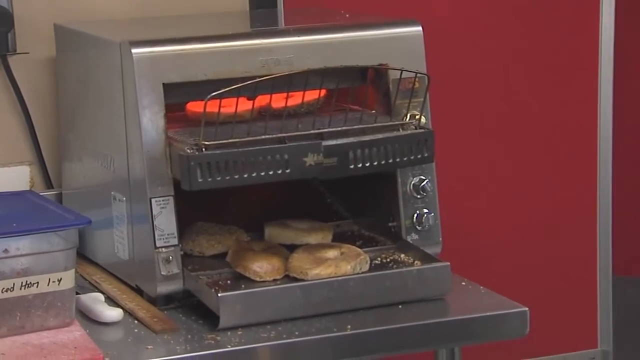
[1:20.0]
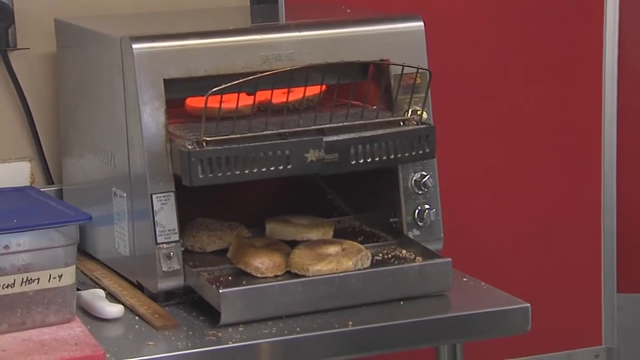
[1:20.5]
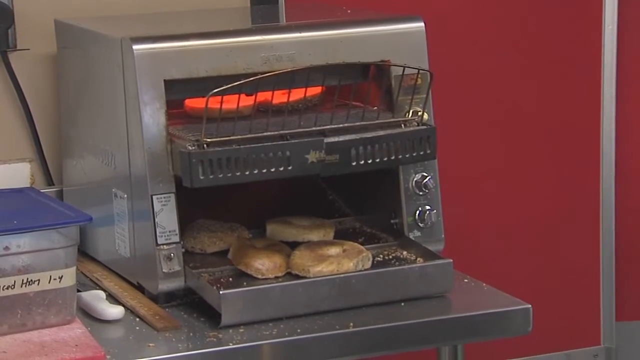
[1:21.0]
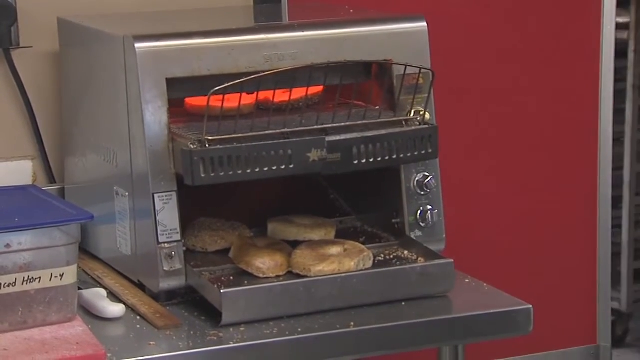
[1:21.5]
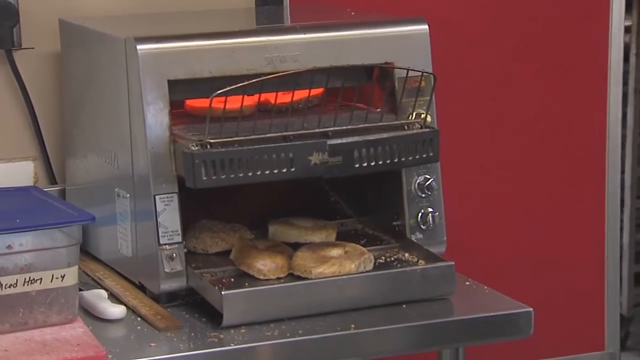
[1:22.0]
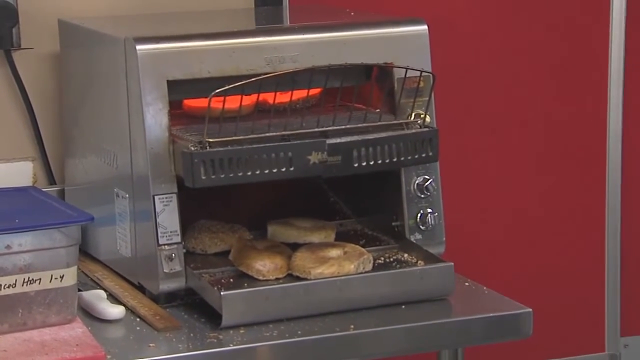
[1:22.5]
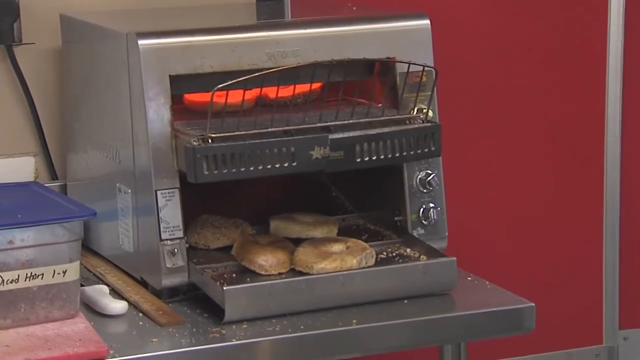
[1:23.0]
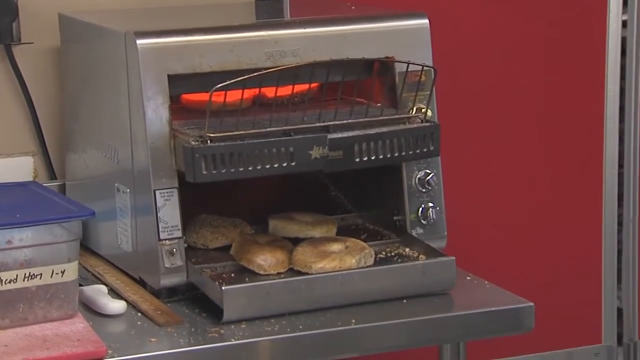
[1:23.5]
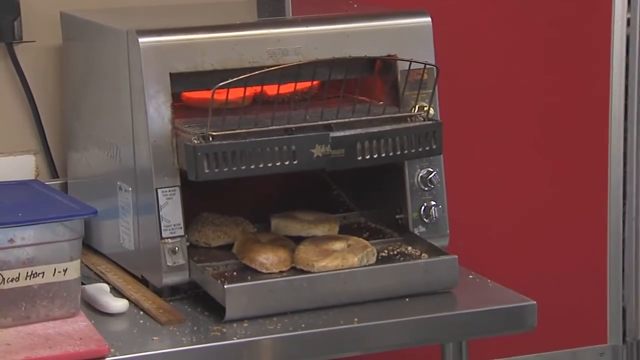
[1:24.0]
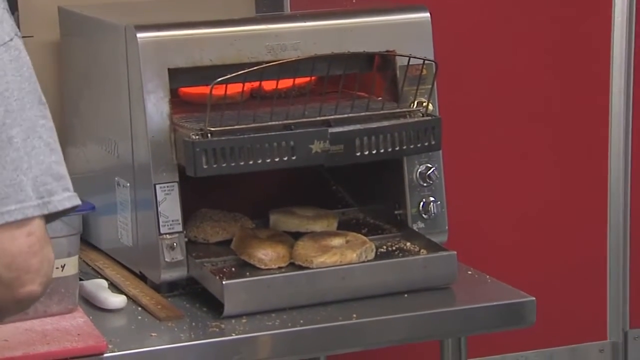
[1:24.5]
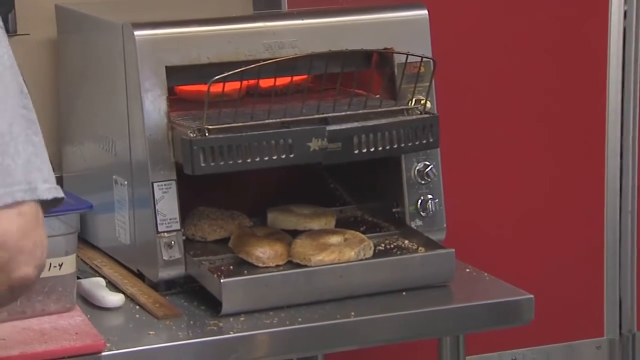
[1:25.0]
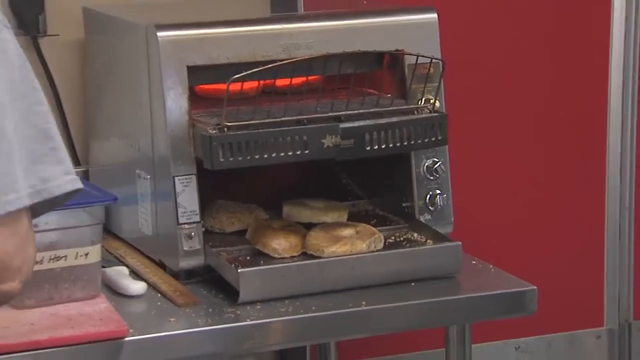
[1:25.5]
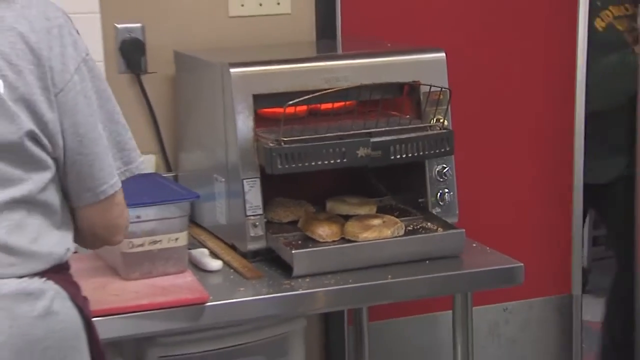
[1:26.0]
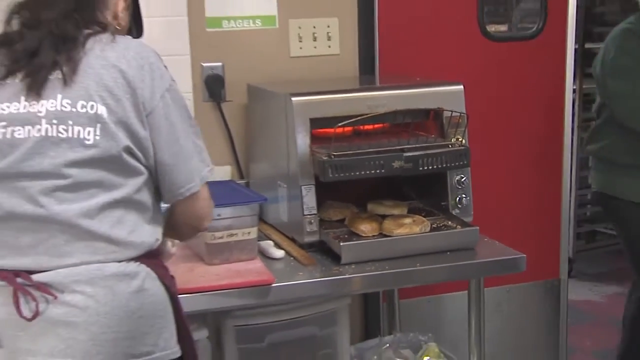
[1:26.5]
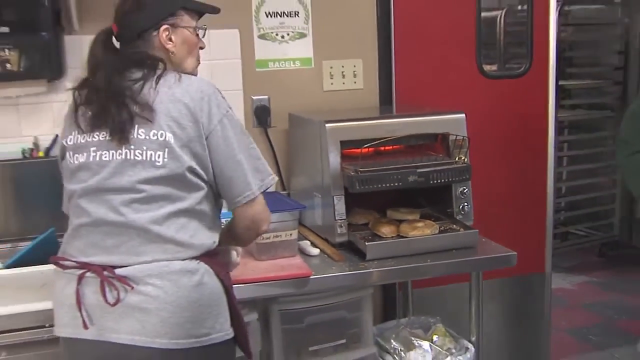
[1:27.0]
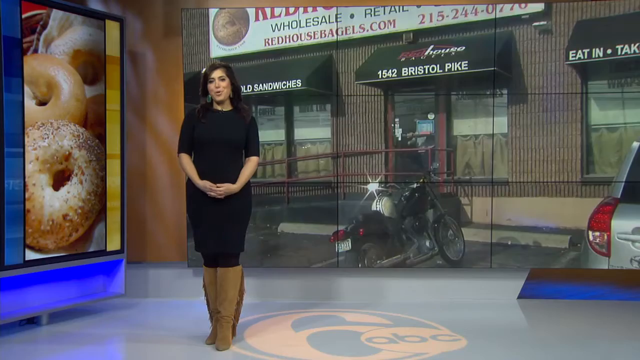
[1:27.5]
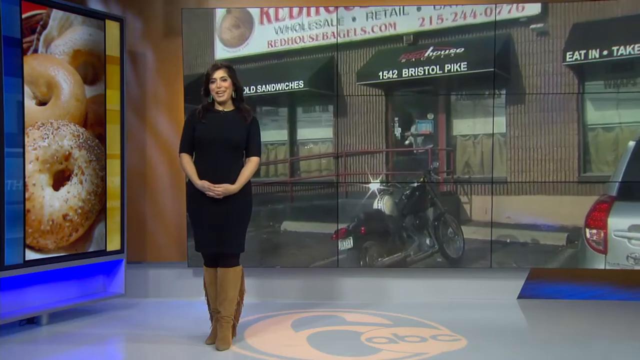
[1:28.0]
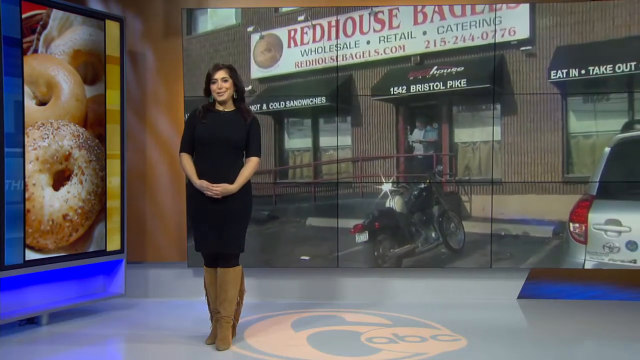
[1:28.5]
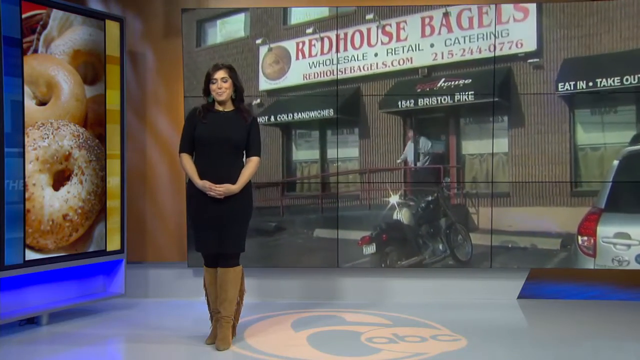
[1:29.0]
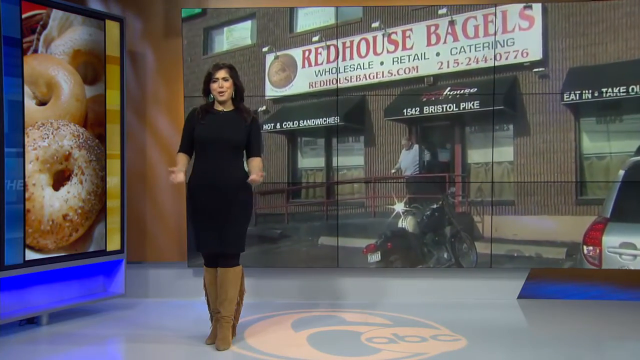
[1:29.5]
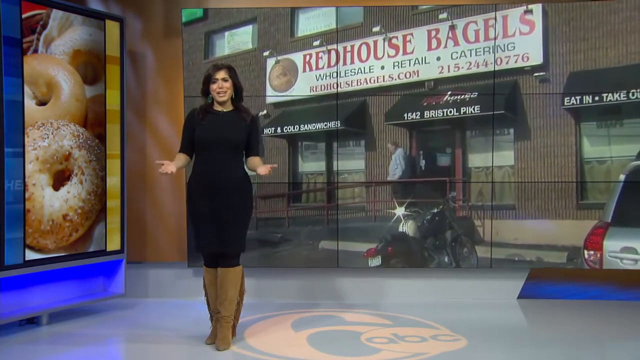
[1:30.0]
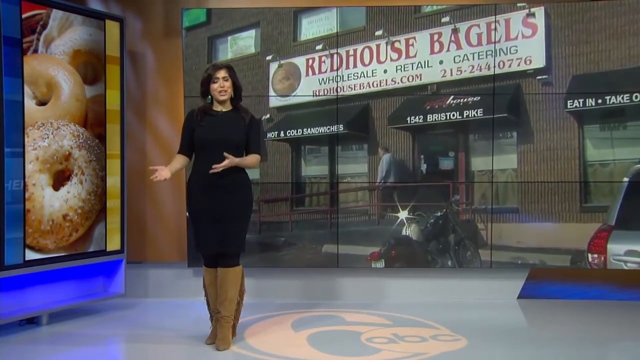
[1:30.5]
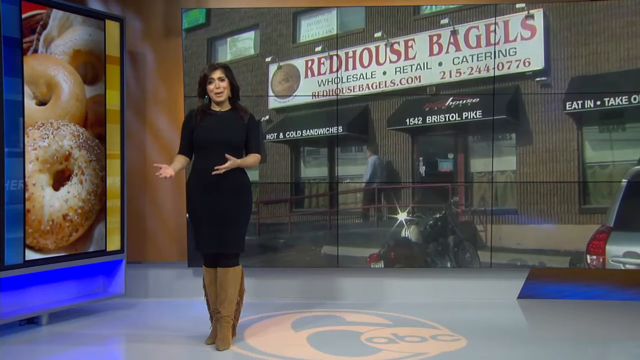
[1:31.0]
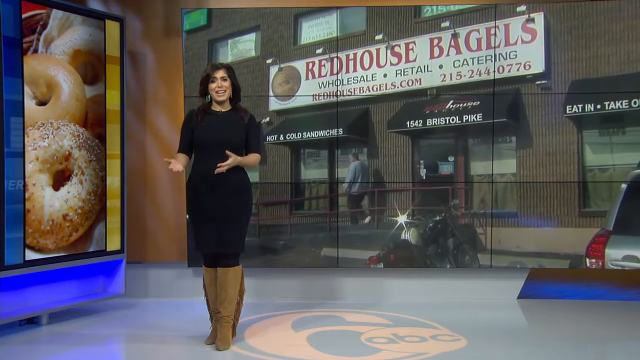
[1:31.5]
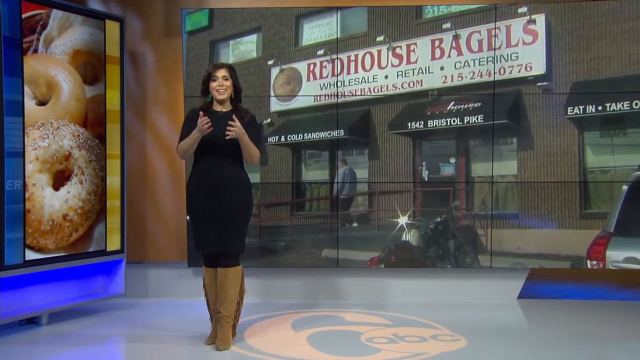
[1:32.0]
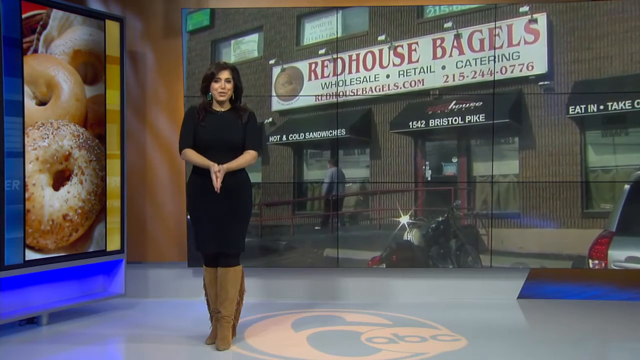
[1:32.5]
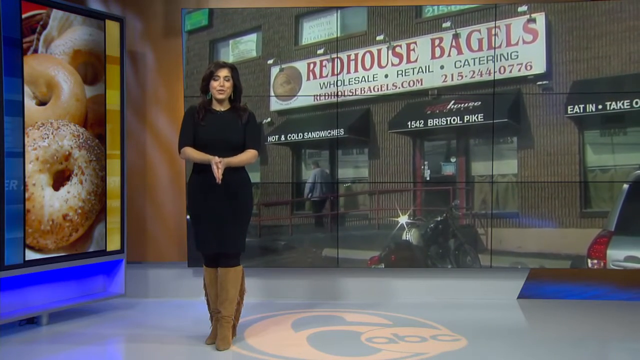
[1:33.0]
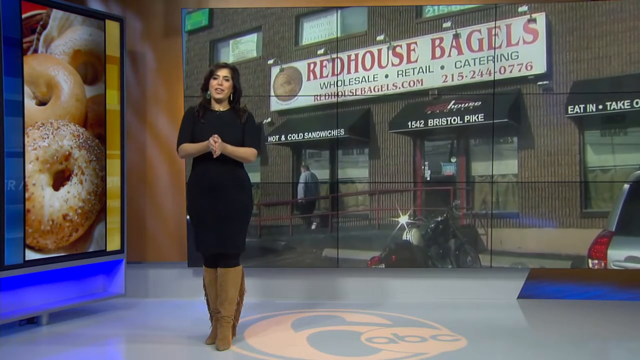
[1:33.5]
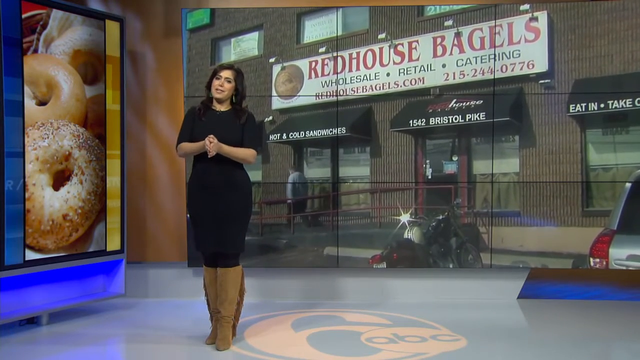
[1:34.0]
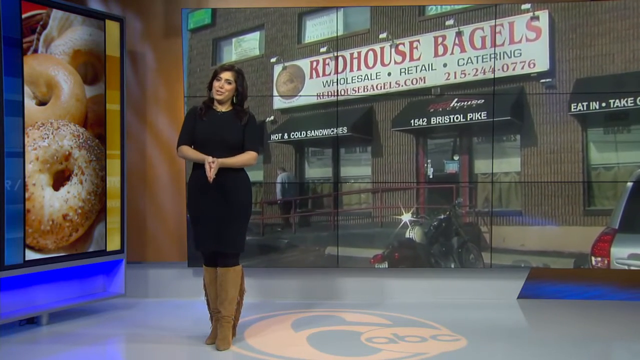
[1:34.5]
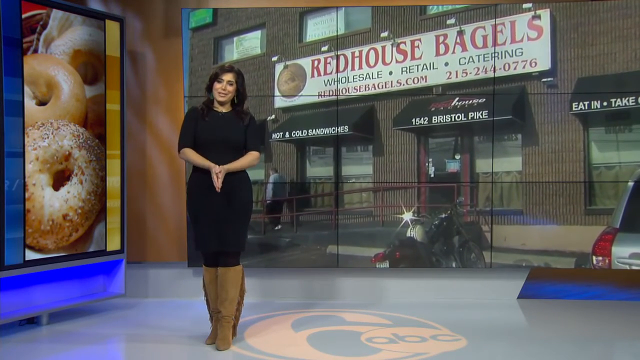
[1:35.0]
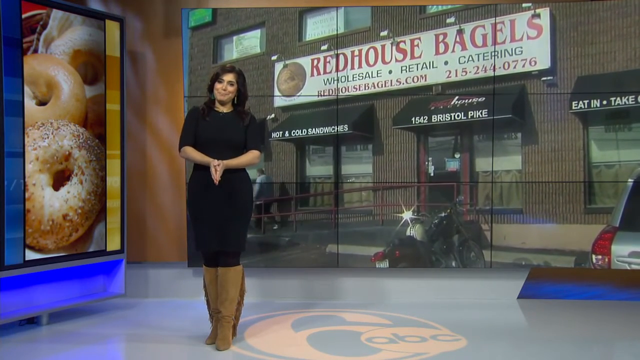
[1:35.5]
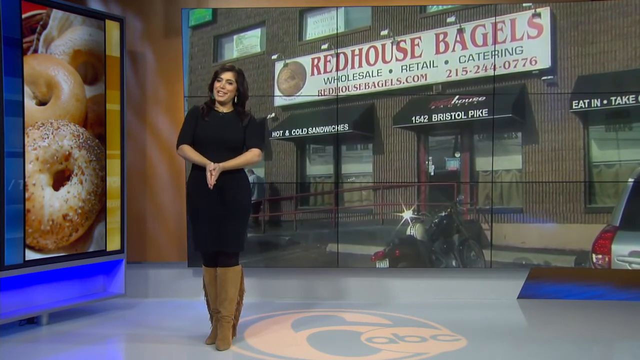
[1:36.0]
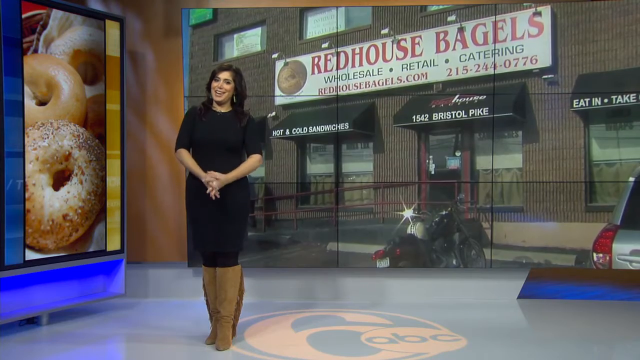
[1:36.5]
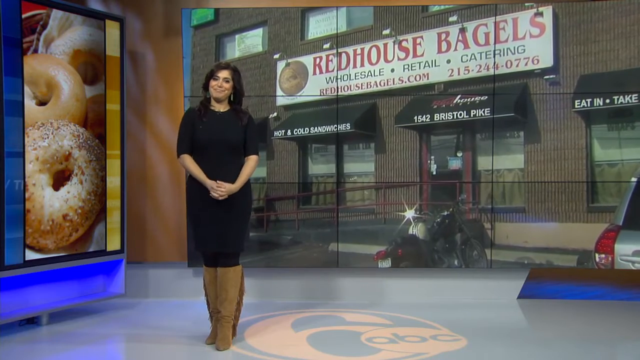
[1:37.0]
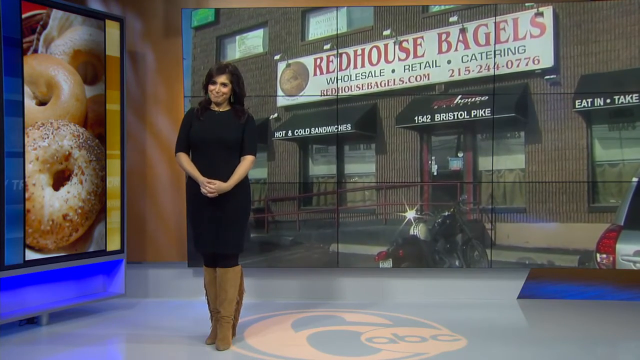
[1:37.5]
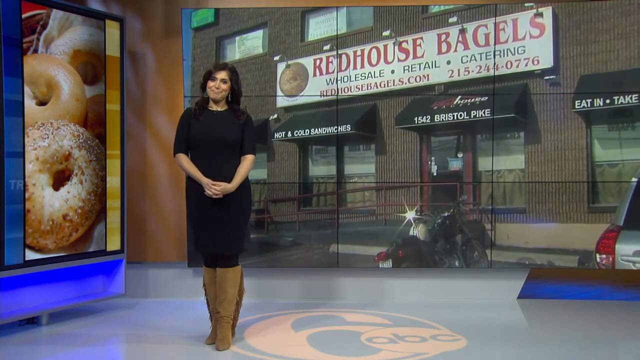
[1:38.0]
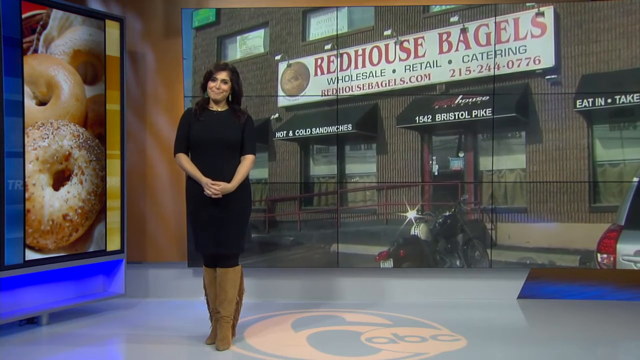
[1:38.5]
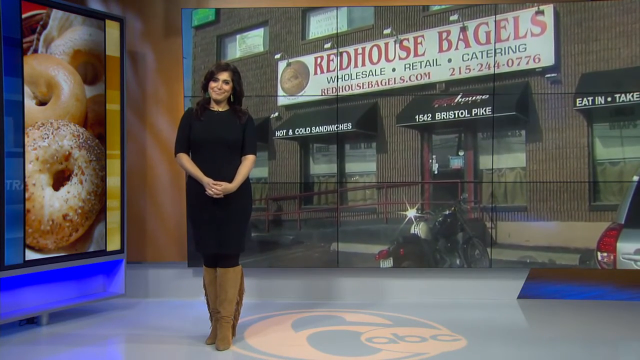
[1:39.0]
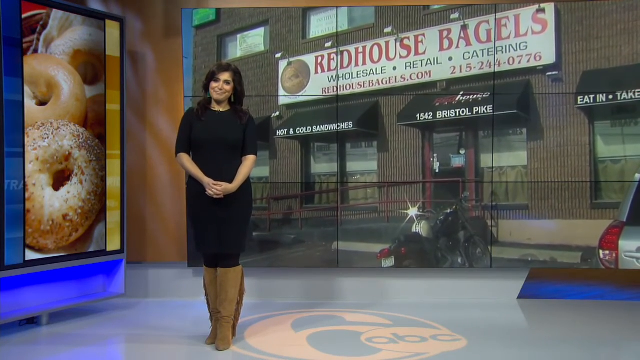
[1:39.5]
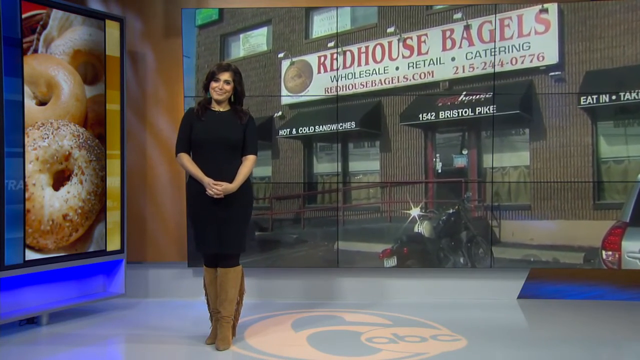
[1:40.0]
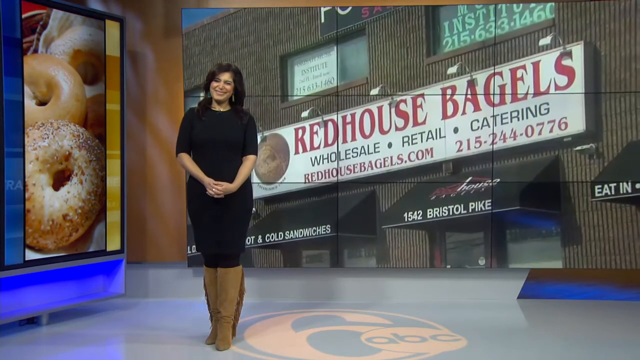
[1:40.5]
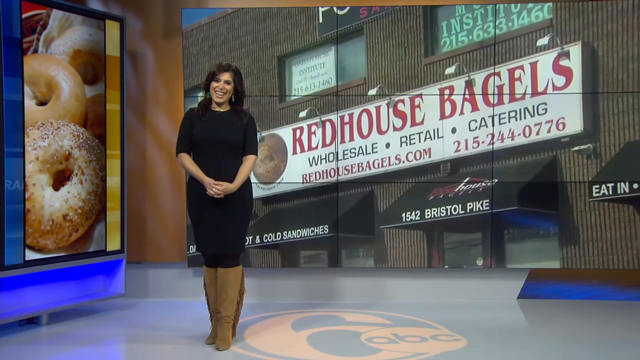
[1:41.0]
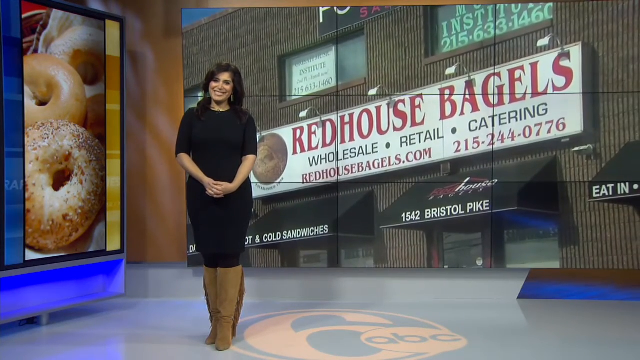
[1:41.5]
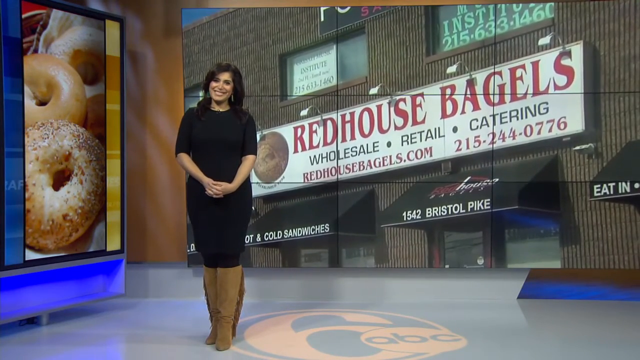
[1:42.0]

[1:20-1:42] Some type of oven, apparently where the bagels are made or baked, shows four bagels inside; the oven appears to be open to show them. To the left of the oven, a woman in a gray work uniform and a red apron appears to be cutting something on the counter. Then a female newscaster with black hair and a black dress is standing up. Behind her is a video of the outside of the bagel business, where a motorcycle and a car are parked, and on the left side of the screen there is a picture of some bagels. The newscaster has her hands joined together, makes a gesture with her hands, and then smiles. Her hand gestures are varied and enthusiastic.